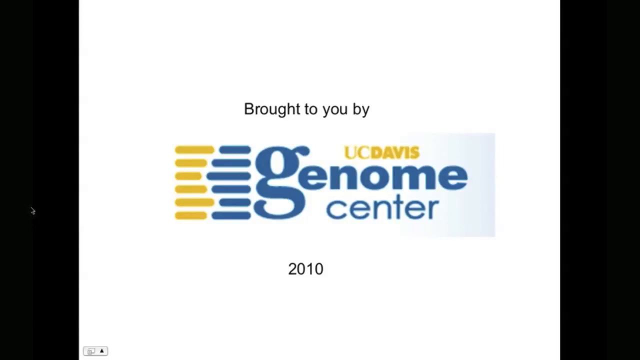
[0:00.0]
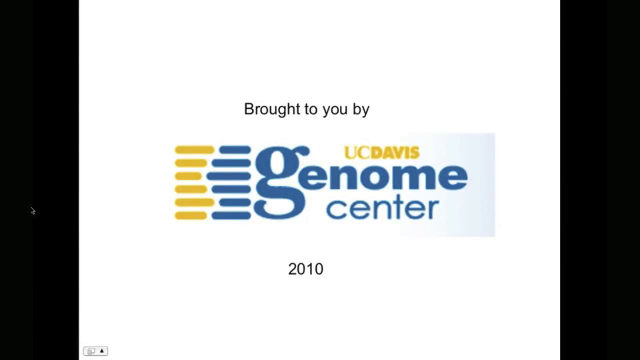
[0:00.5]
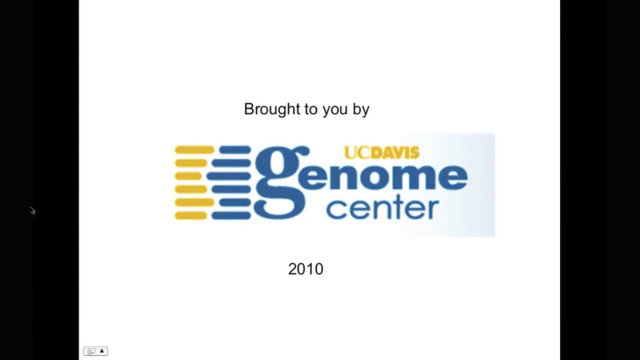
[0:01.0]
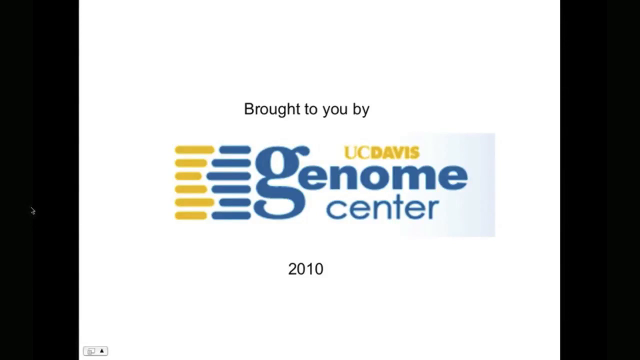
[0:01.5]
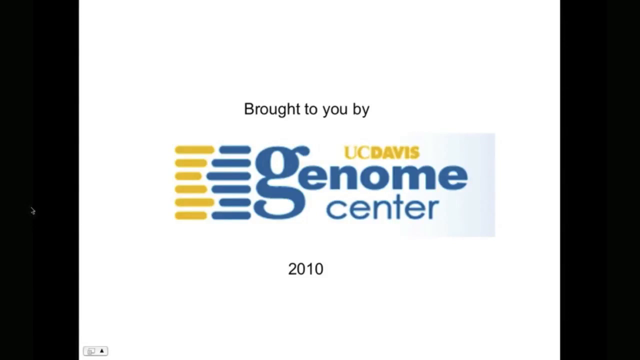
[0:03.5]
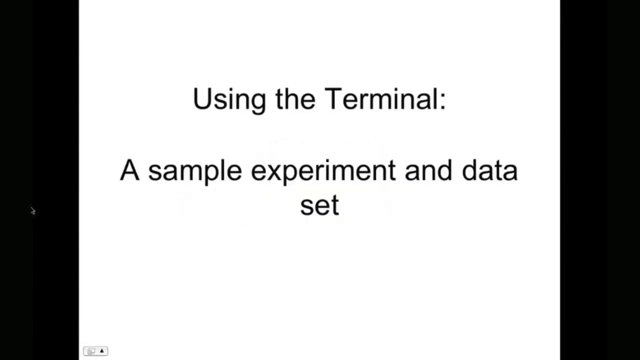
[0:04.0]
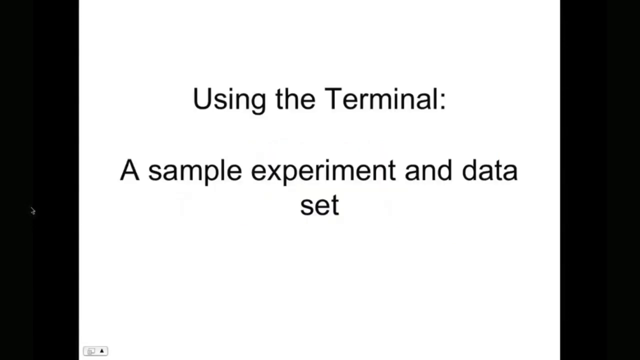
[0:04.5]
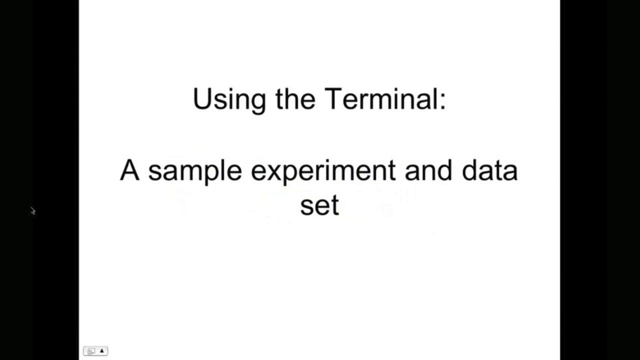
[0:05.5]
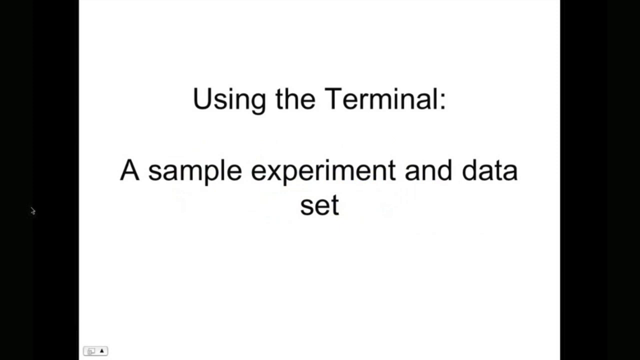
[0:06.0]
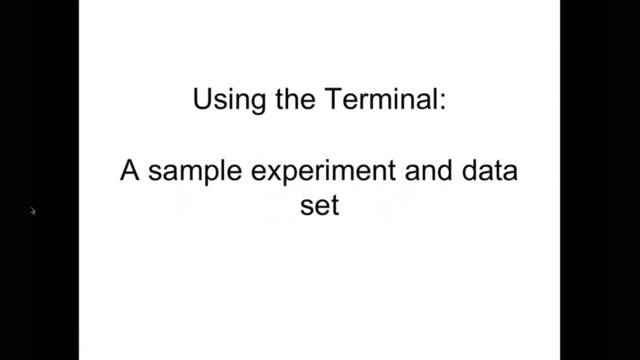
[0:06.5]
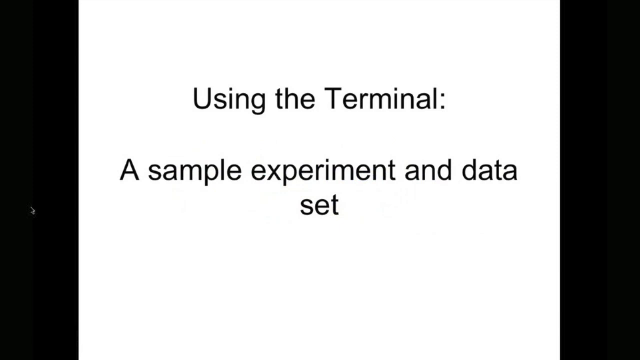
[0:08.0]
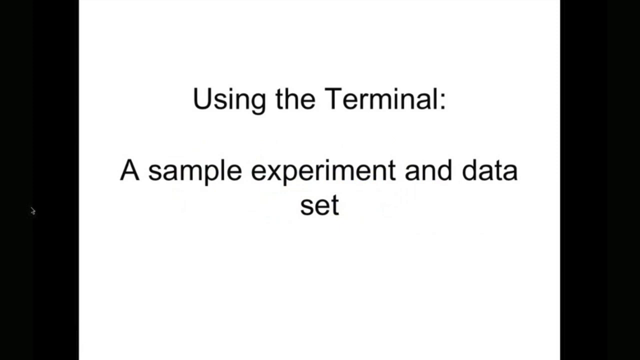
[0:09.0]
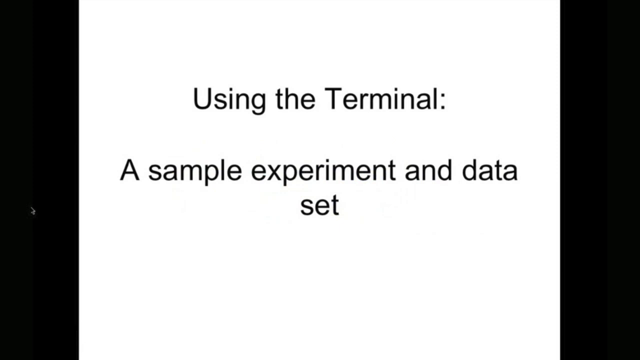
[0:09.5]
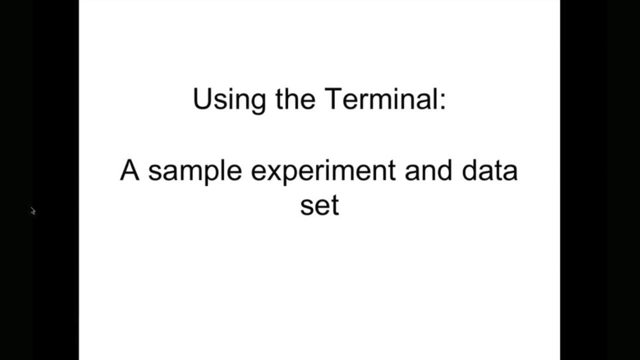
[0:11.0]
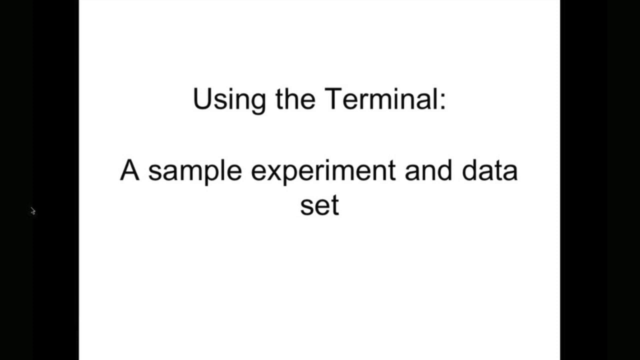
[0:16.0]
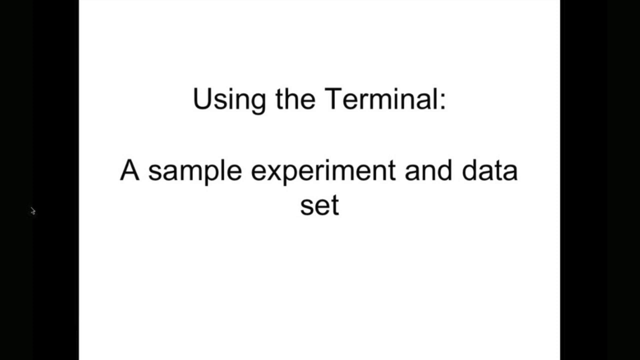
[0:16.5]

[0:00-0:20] The graphics are very pixelated, with blue and yellow colors on top of the background of the whole screen. There are black colors at the top of the screen, along with text that is not clearly readable.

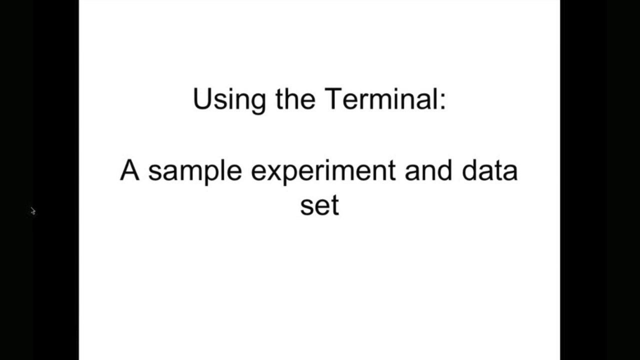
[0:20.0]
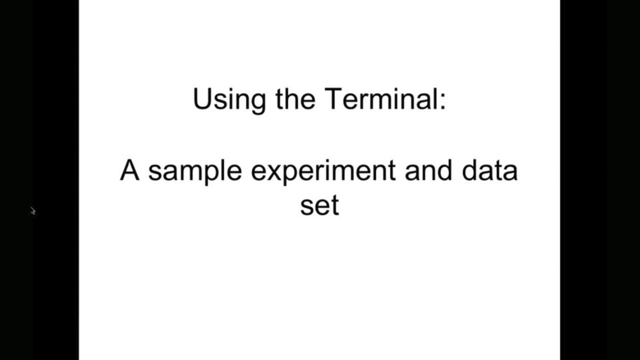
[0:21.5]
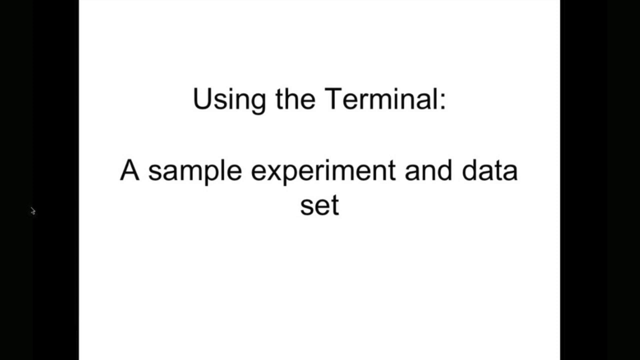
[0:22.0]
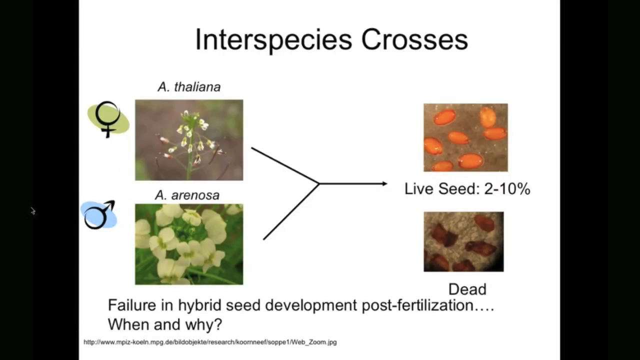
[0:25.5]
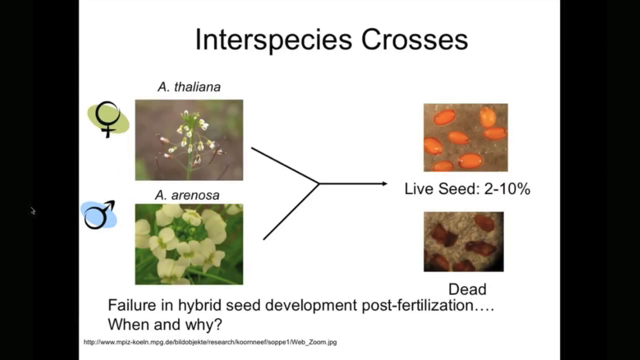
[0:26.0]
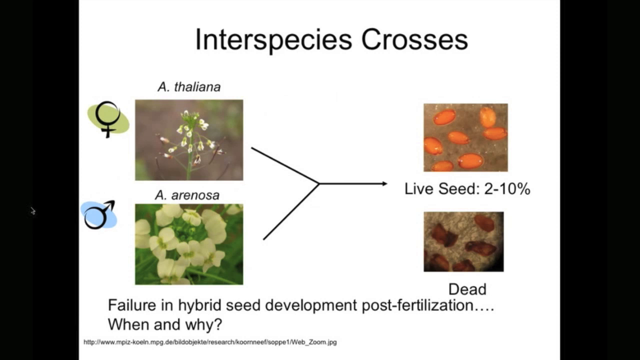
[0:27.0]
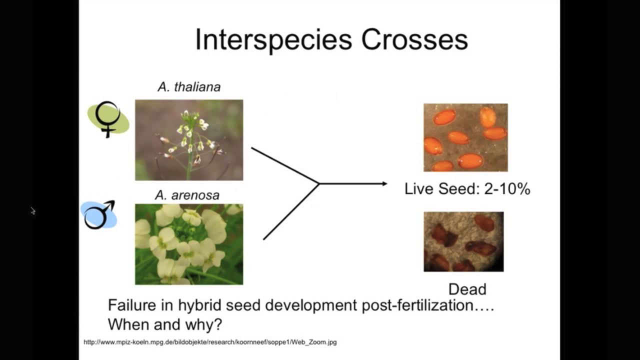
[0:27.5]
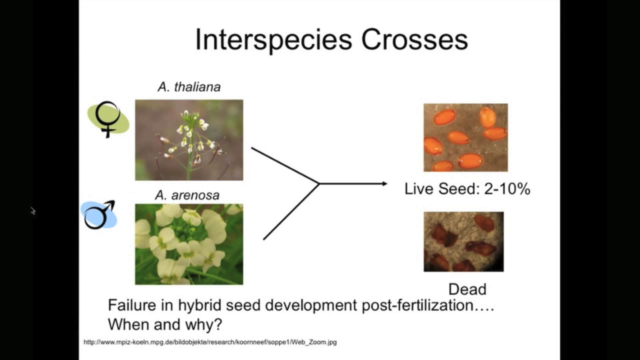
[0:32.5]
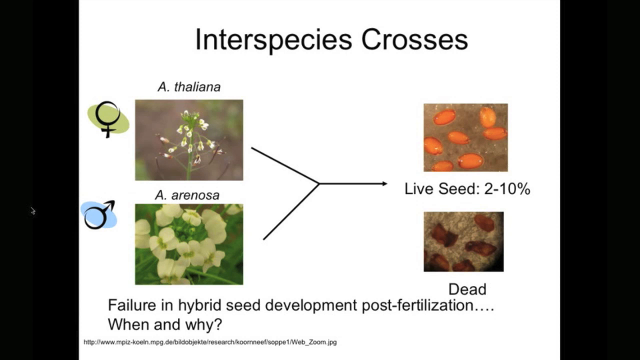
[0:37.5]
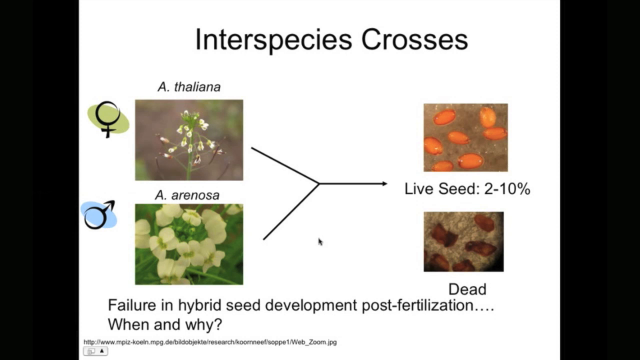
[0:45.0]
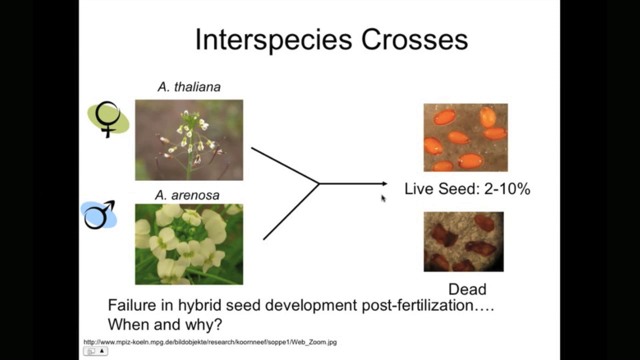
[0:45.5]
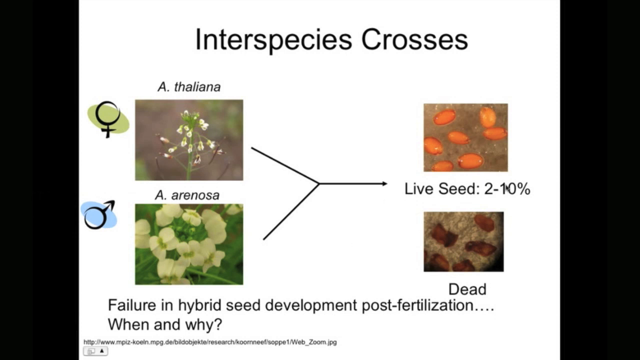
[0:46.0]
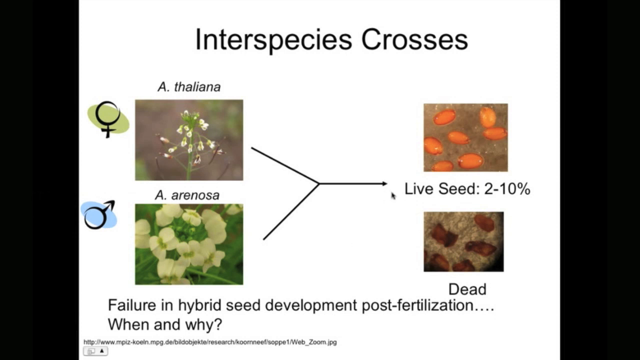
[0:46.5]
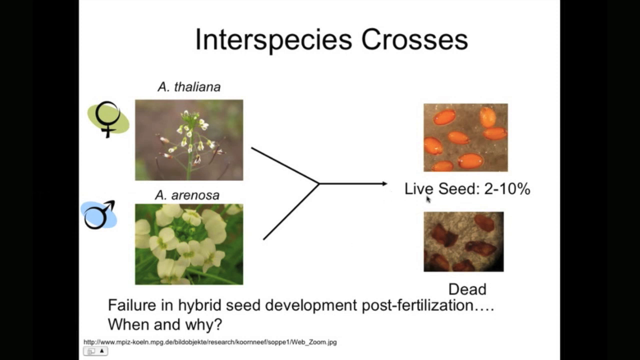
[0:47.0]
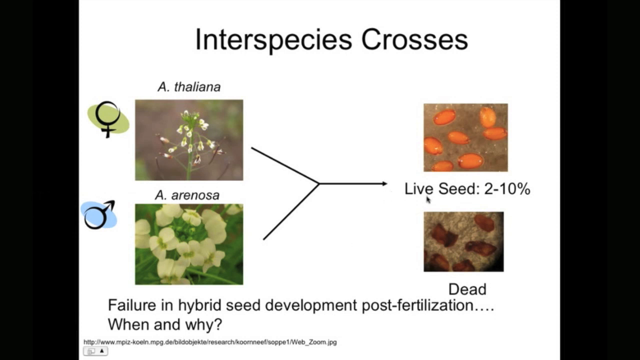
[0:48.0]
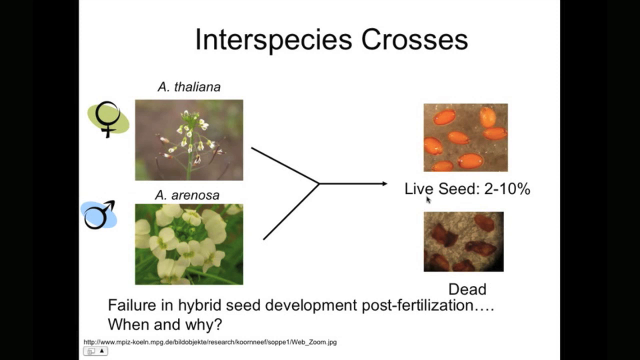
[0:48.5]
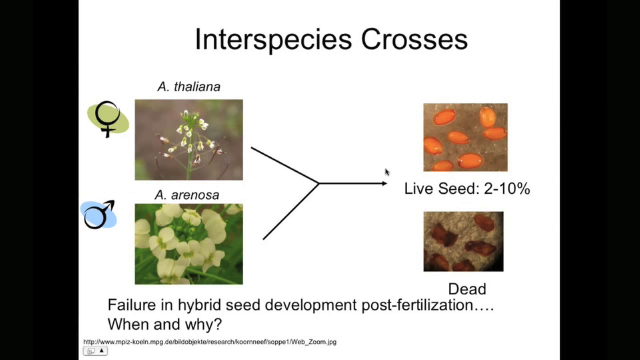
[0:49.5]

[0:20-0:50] The content concerns hybrid seed development and crosses between different species, with full-color columns contrasting how the species look originally and after they have been crossed.